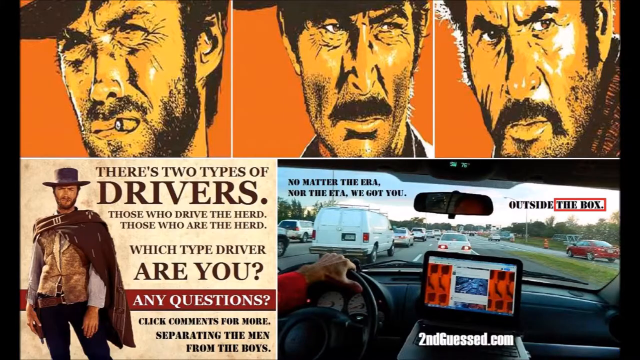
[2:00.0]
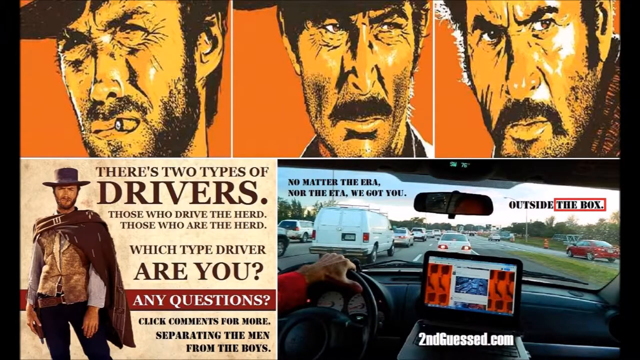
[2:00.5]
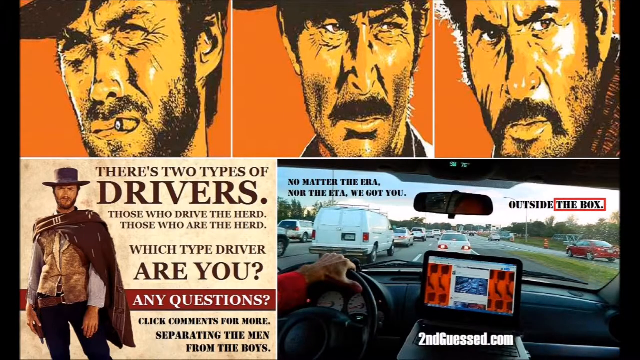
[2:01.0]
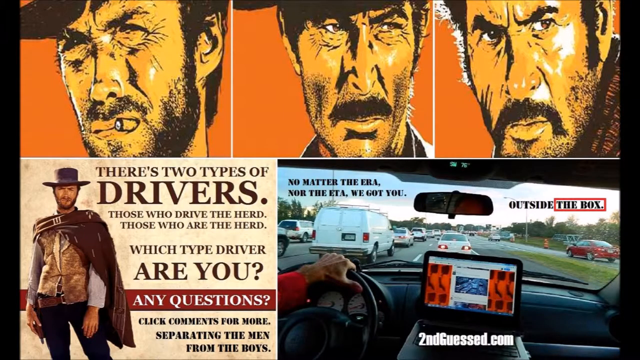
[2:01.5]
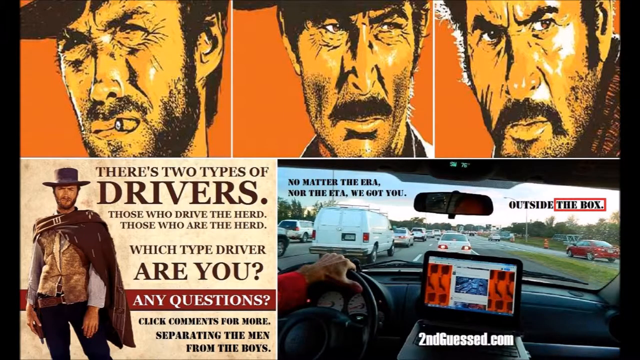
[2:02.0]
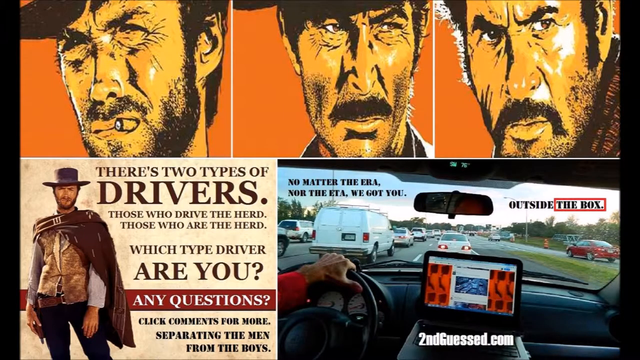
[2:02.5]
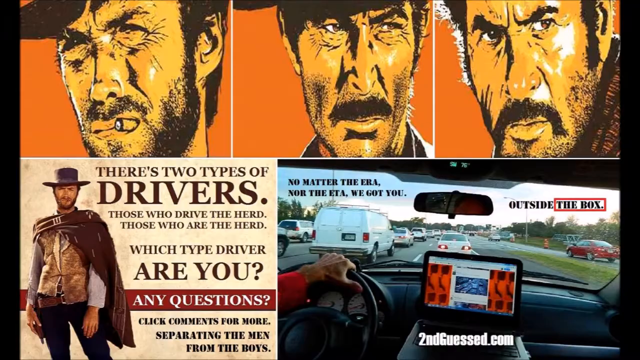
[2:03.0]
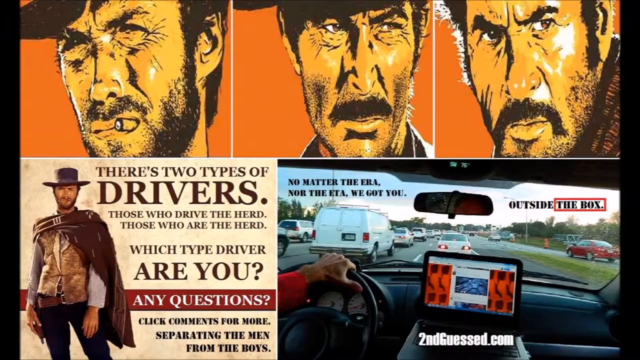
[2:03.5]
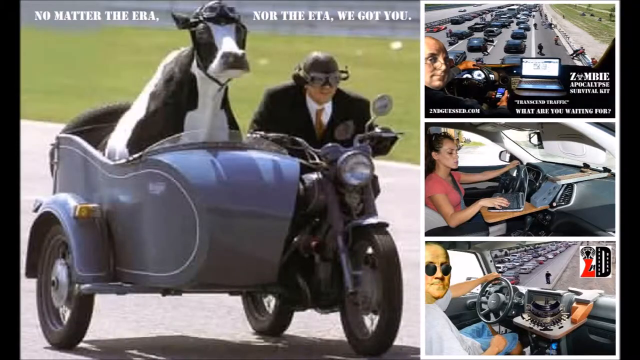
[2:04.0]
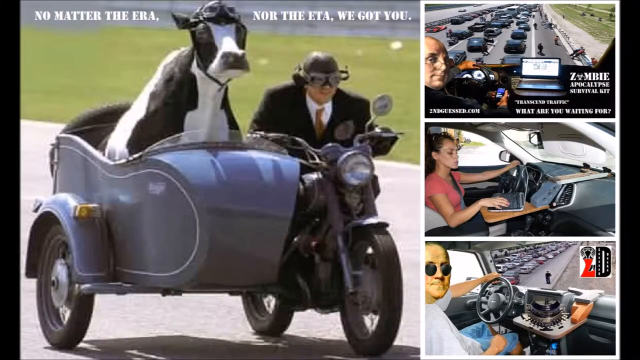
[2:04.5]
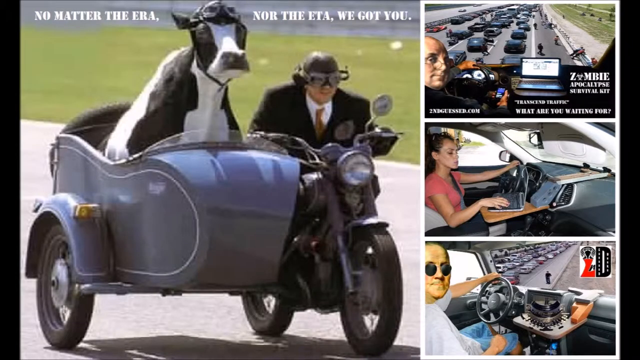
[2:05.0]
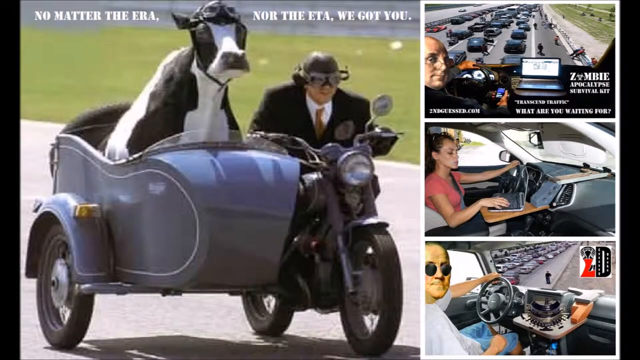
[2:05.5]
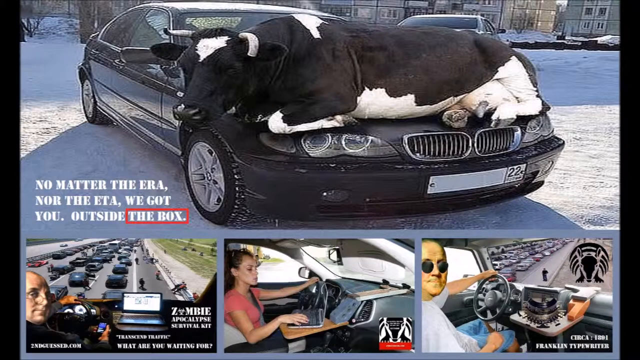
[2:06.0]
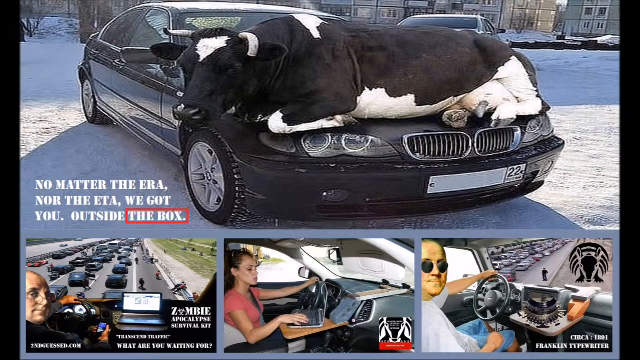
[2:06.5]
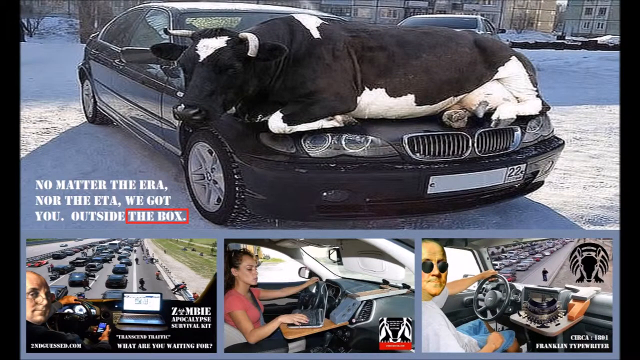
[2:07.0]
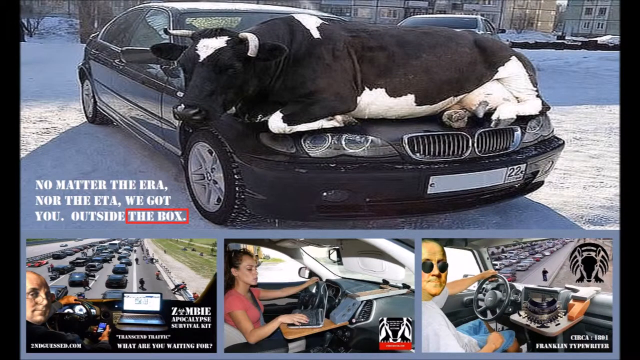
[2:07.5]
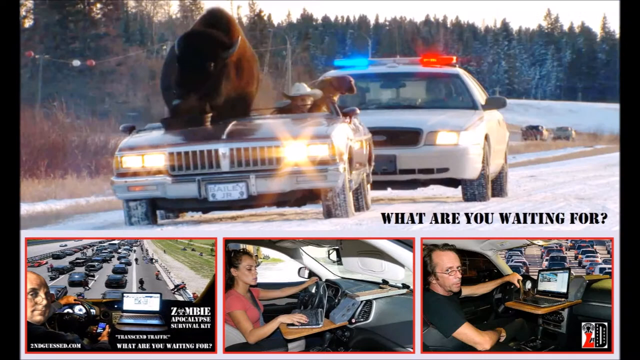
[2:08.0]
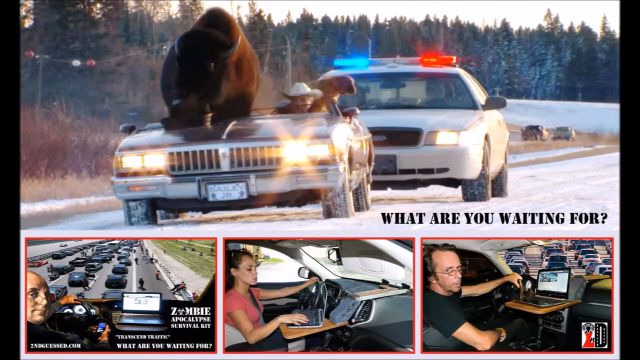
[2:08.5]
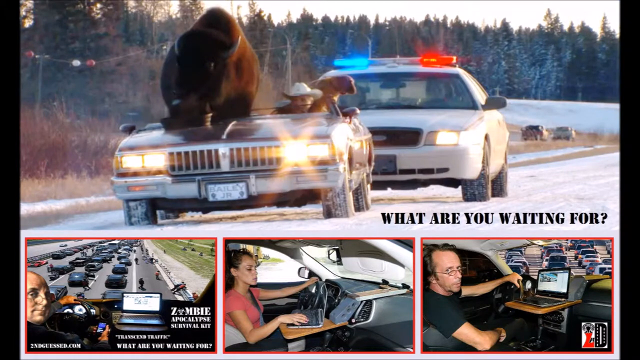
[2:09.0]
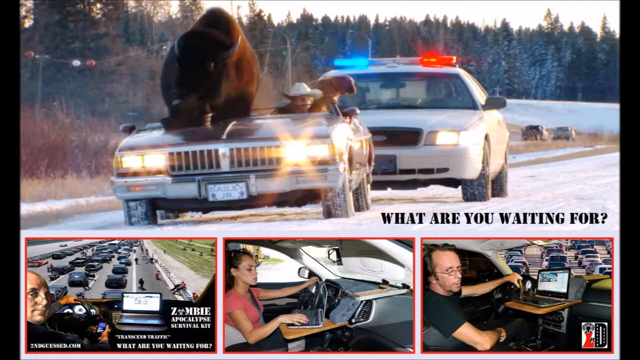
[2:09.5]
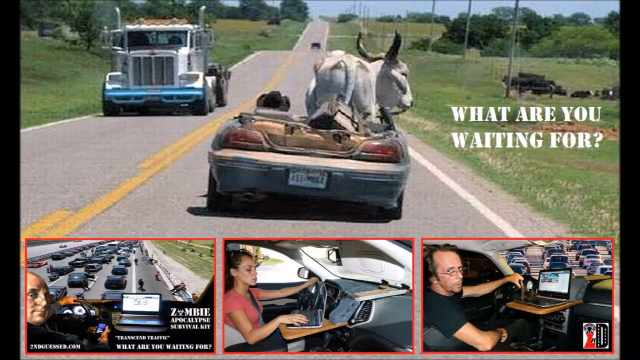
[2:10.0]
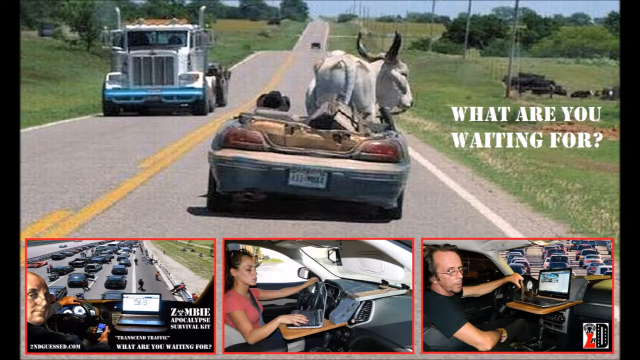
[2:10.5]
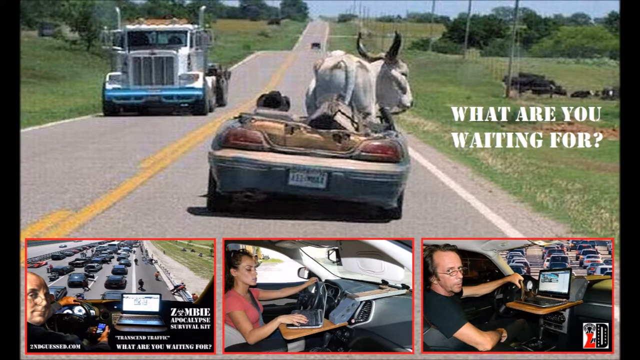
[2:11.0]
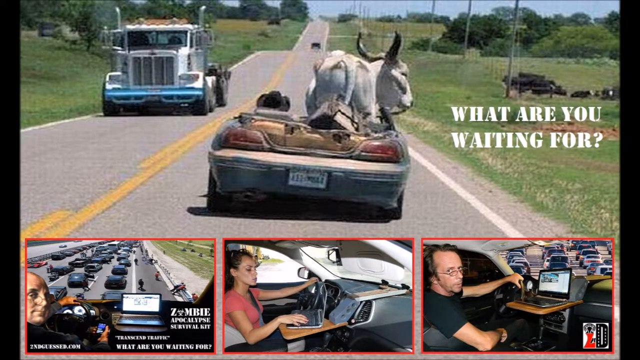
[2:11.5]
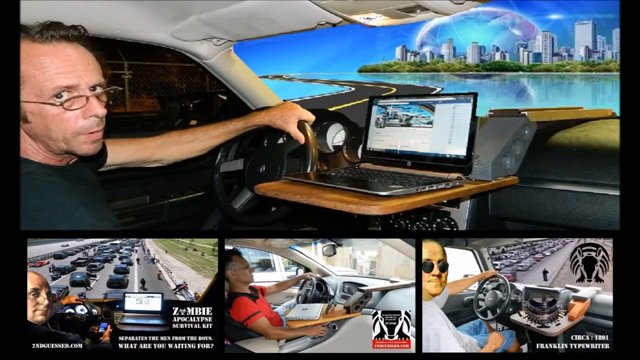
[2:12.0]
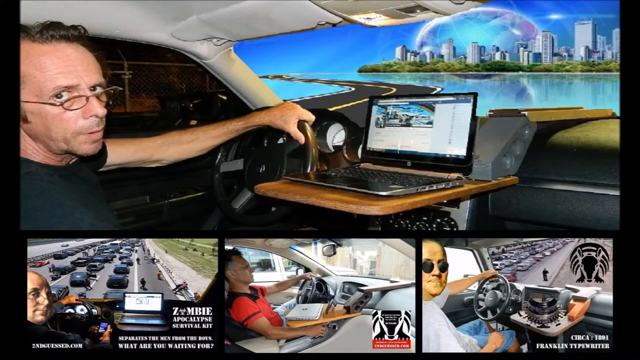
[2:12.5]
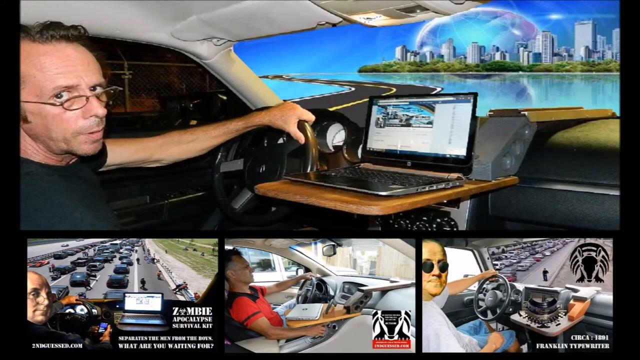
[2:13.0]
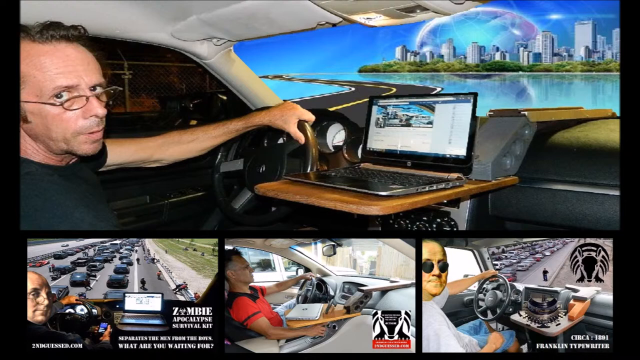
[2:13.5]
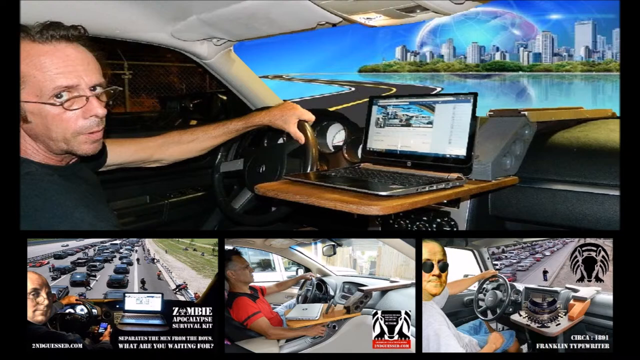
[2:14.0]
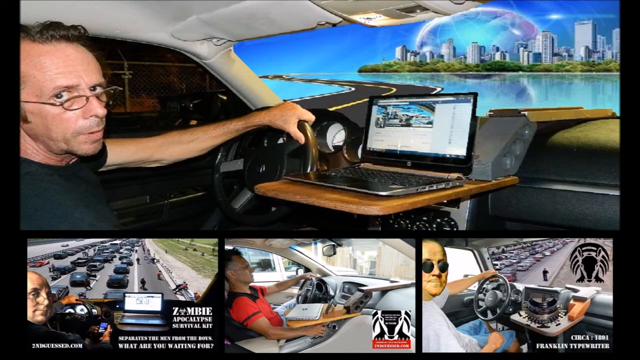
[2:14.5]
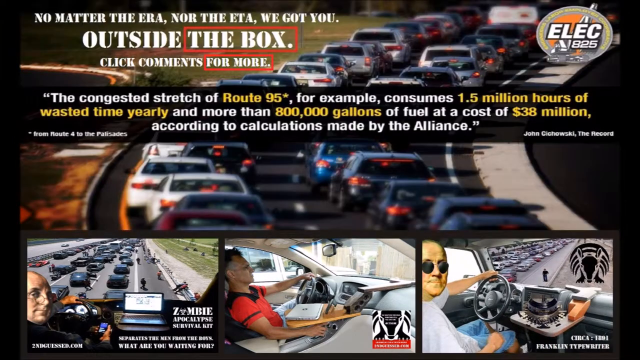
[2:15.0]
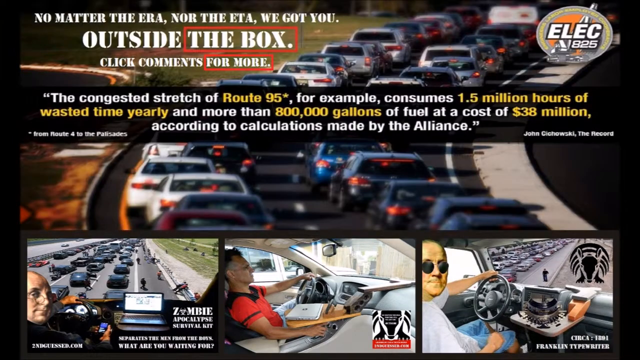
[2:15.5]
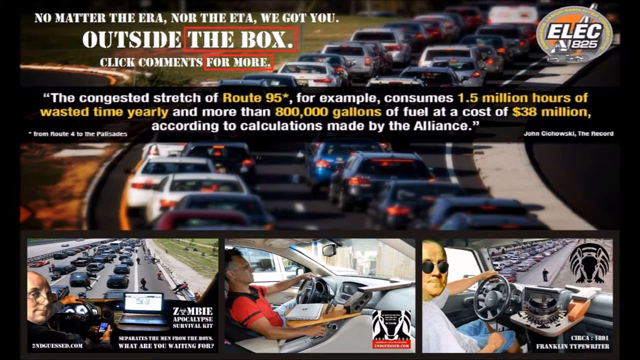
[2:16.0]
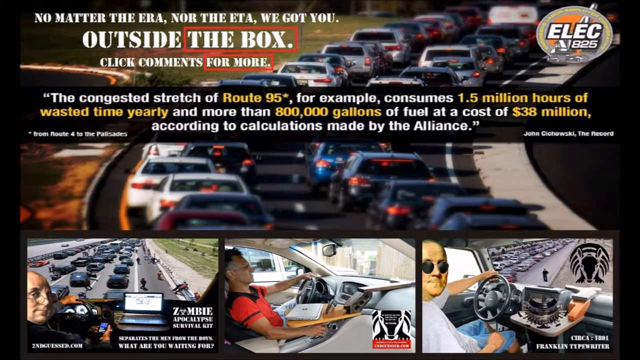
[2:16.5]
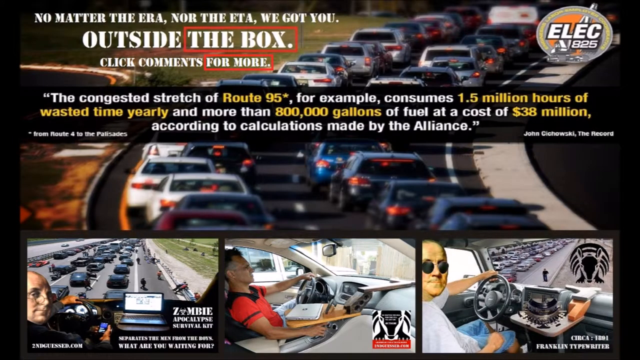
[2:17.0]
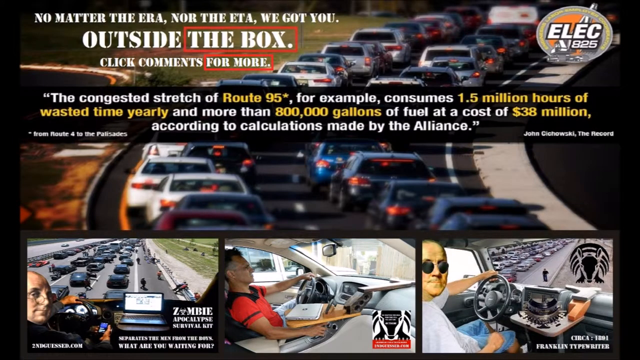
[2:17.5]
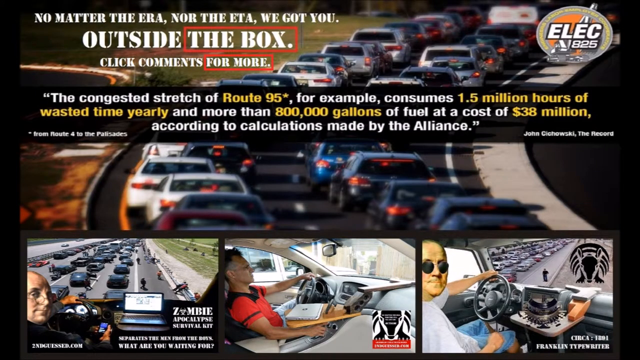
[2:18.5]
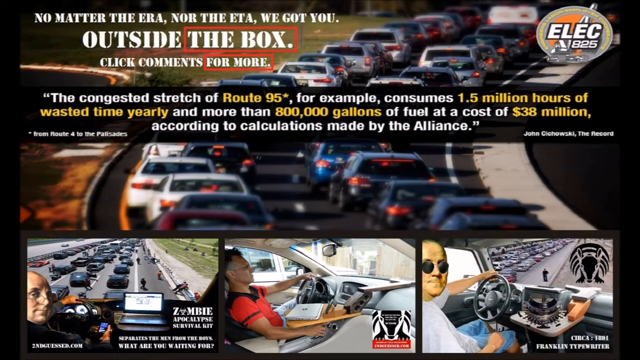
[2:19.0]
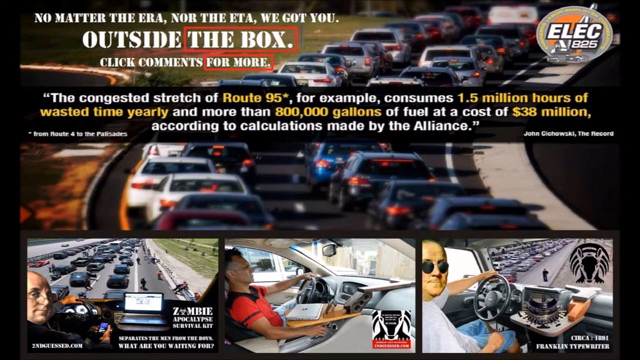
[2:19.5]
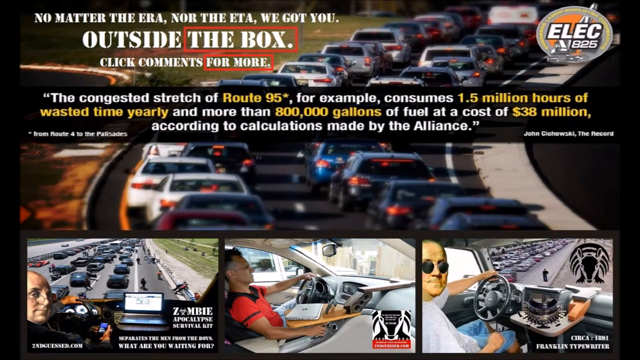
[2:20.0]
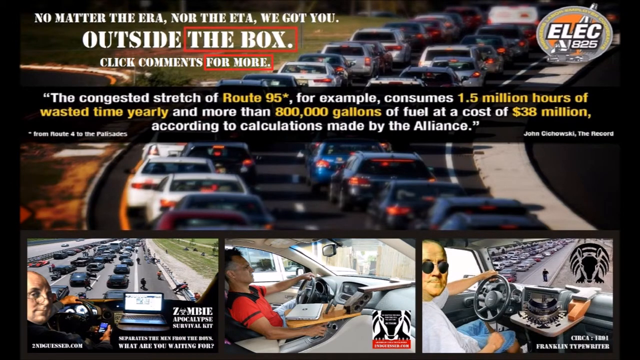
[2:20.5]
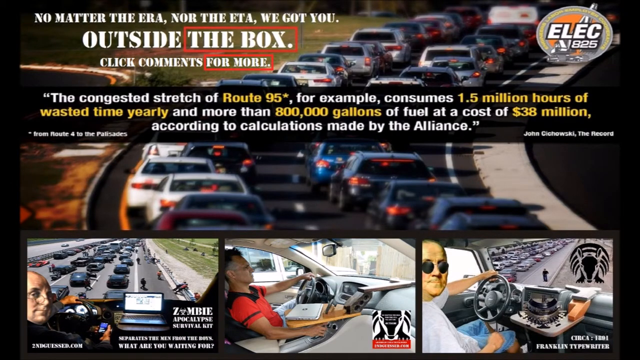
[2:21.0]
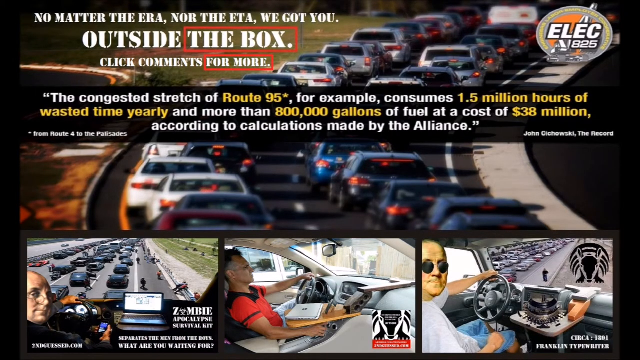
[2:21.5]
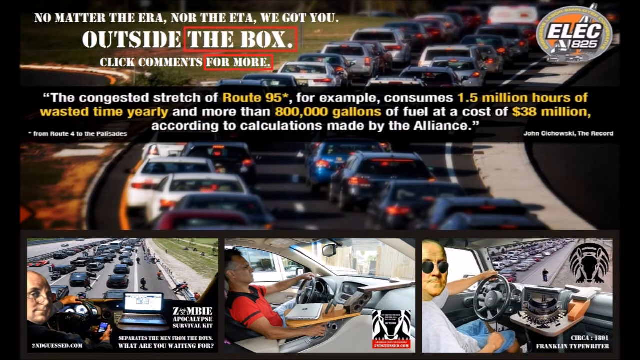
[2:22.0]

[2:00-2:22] The Good, the Bad and the Ugly image has text beside it: "there's two types of drivers, those who drive the herd, those who are the herd, which type driver are you? Any questions?" The image continues to be shown. A motorcycle and sidecar is driven by a man in a suit wearing an old-style leather helmet, with a cow sitting in the sidecar. A cow sits on the bonnet of a car, and a buffalo, apparently an Indian-style buffalo, sits on a car. A man drives with a laptop on a shelf next to him, a big city in the distance. Finally, the text "no matter the ERA, nor the ETA, we got you, outside the box" appears, followed by text reading "the congested stretch of Route 95, for example, consumes 1.5 million hours of wasted time yearly, and more than 800,000 gallons of fuel at a cost of $38 million. According to calculations made by the Alliance."